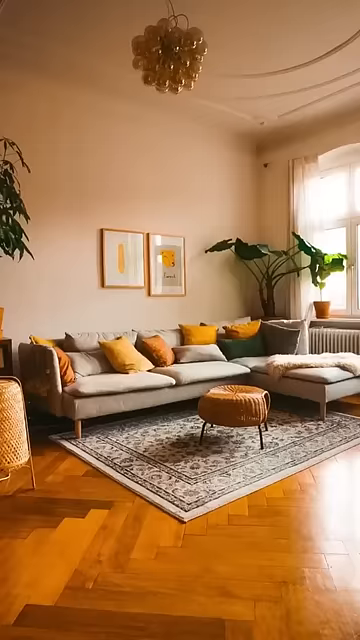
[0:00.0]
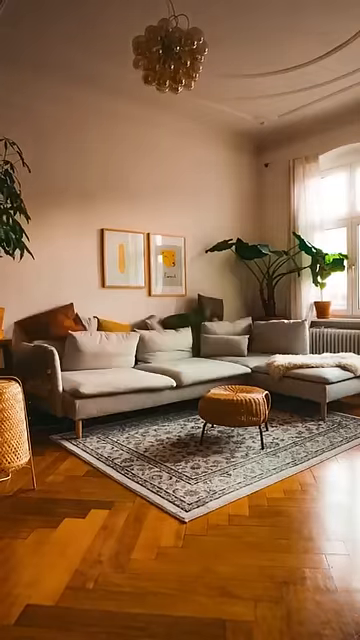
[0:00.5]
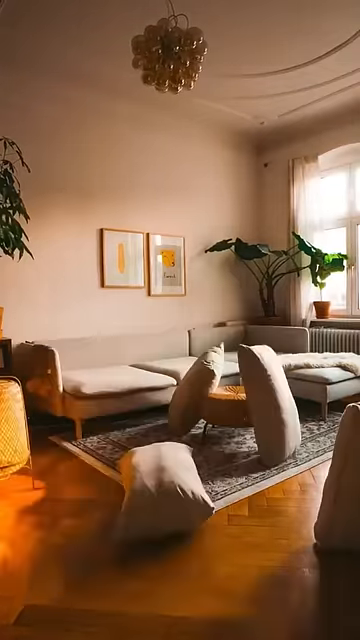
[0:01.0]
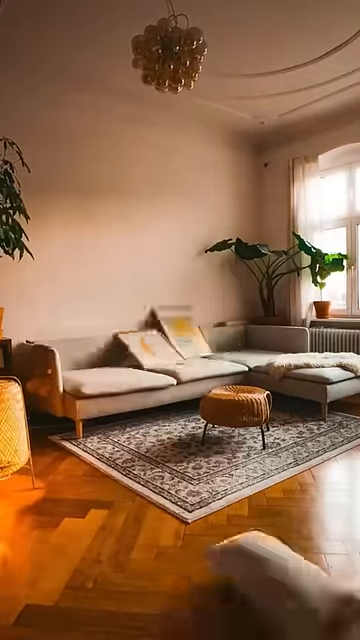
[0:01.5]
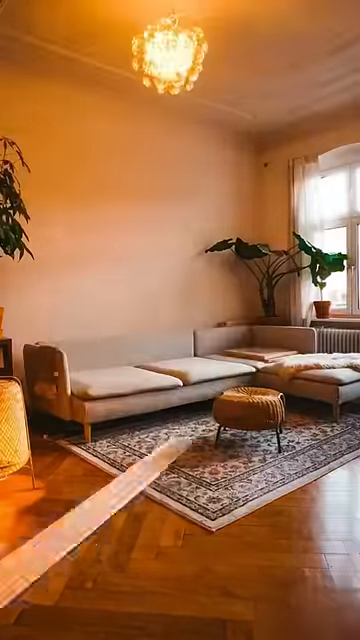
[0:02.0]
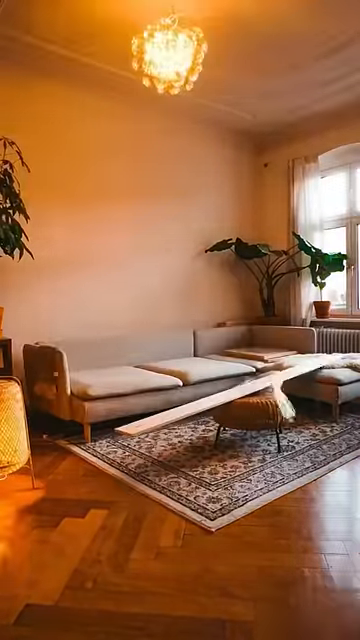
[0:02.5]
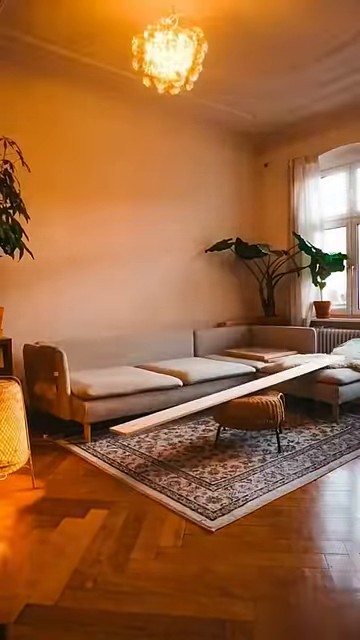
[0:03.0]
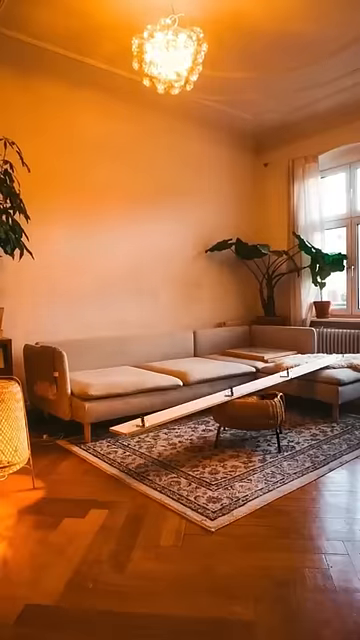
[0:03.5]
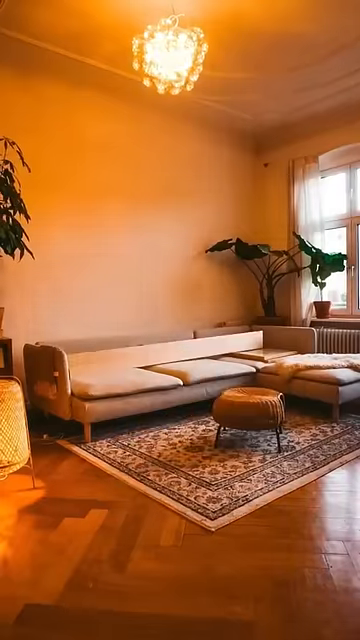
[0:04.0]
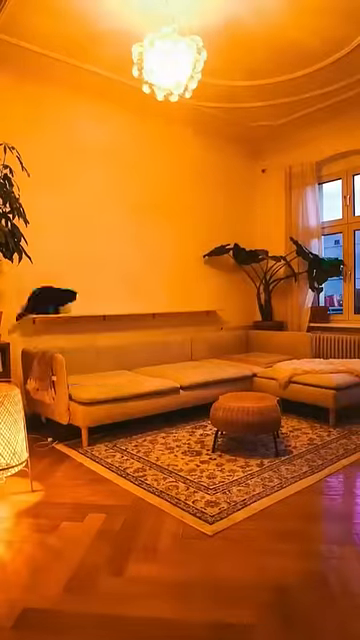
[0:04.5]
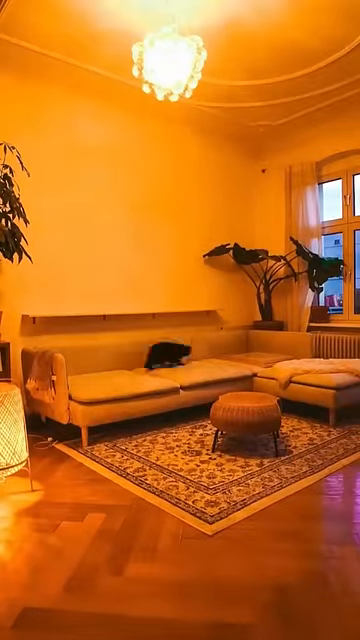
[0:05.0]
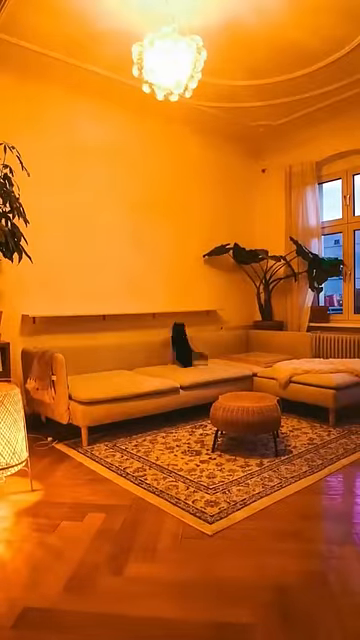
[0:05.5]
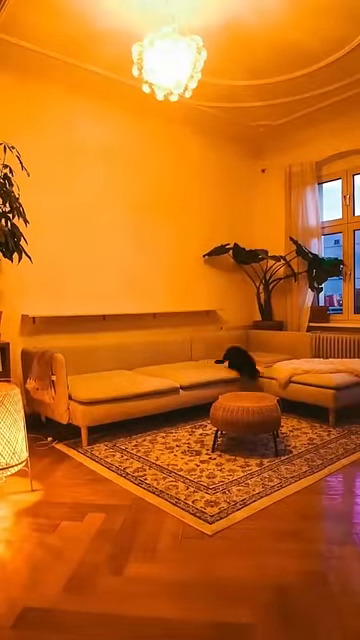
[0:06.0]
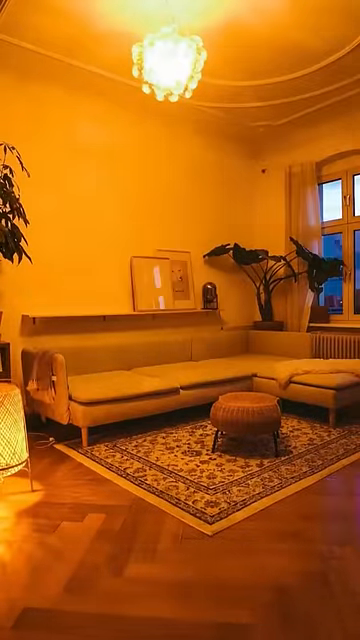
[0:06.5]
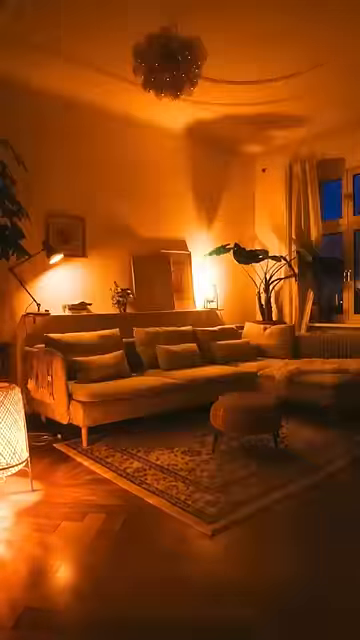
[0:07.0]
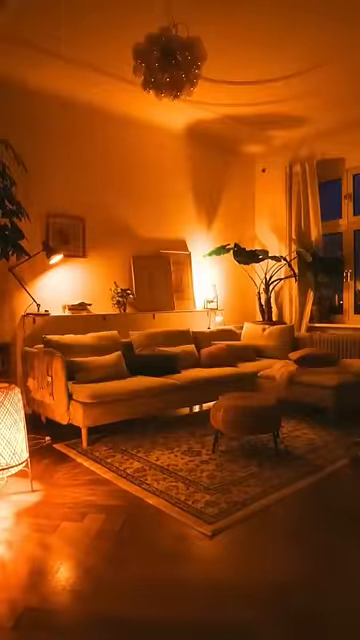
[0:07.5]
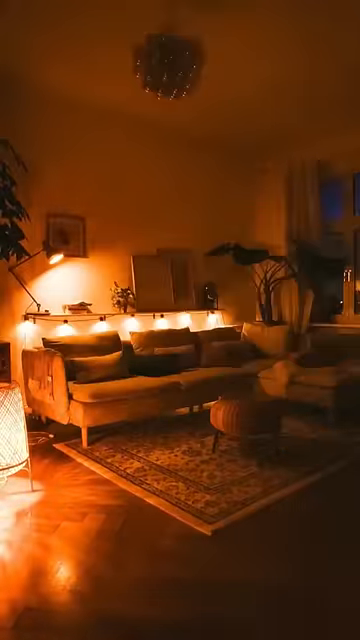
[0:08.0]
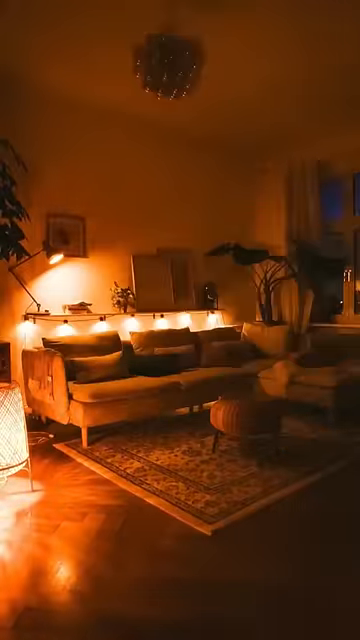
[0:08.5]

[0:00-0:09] The video presents unexpected living room decorating ideas, showing a living room with a couch, which looks to be a sectional, and a coffee table. A person takes all the back cushions and all the pillows off the couch. Next, a long plank of wood appears; they attach some hooks to it, and underneath they attach maybe four or five lights, creating down lighting on the back of the couch. They put pictures on top of the shelf, so it is basically a shelf with down lighting that looks down onto the couch. They also put a couple more table lamps on either side of the couch, which creates mood lighting. While they are building this, a cat or mouse or something runs around the couch, kind of getting in the way of everything before the shelf is put up.